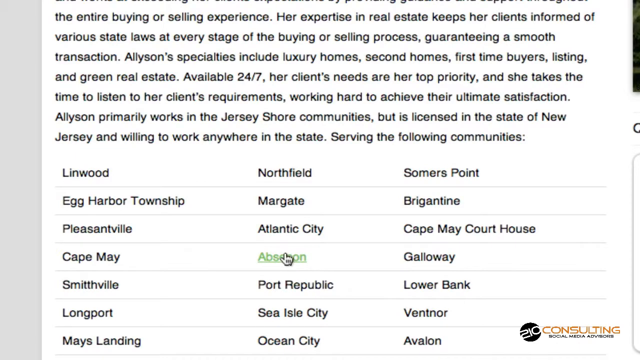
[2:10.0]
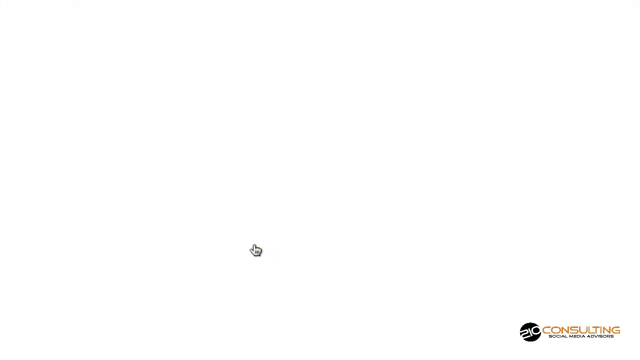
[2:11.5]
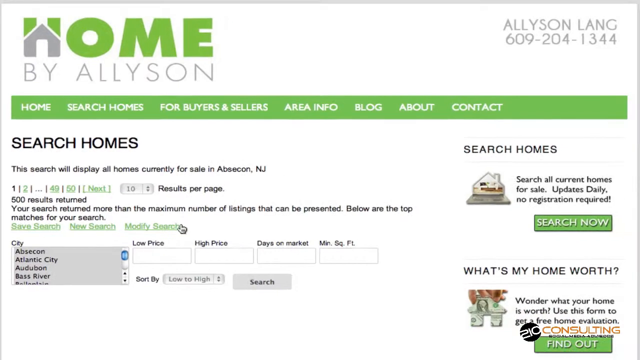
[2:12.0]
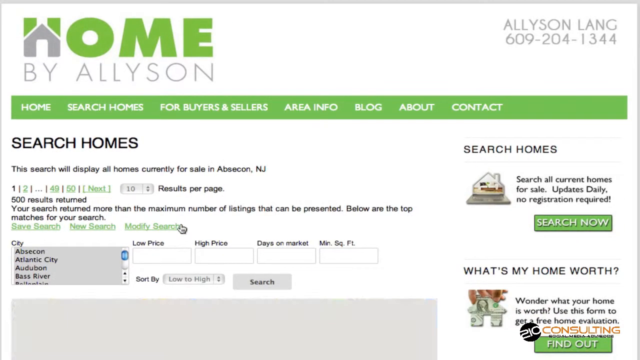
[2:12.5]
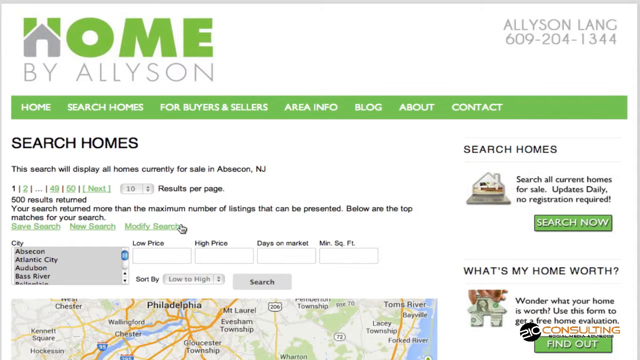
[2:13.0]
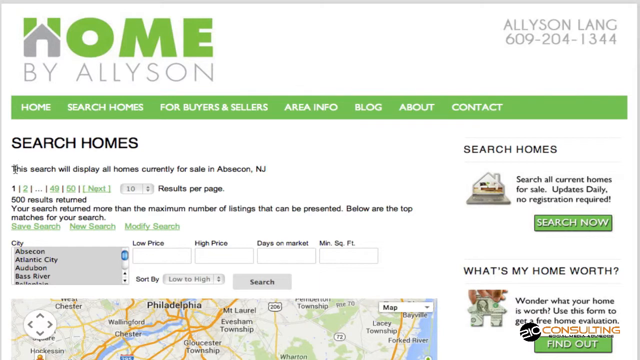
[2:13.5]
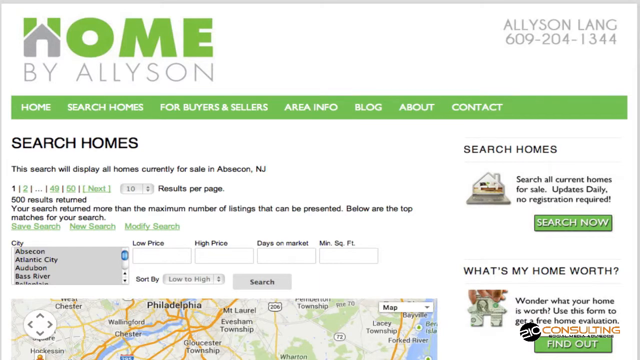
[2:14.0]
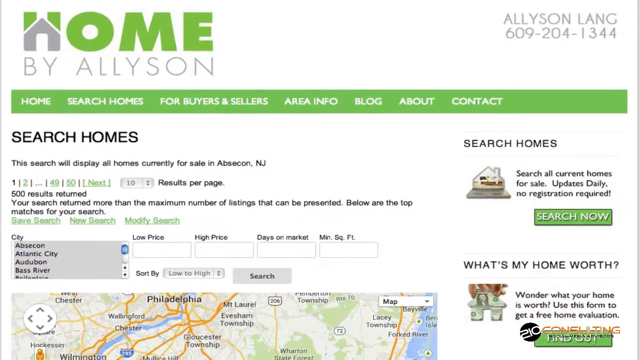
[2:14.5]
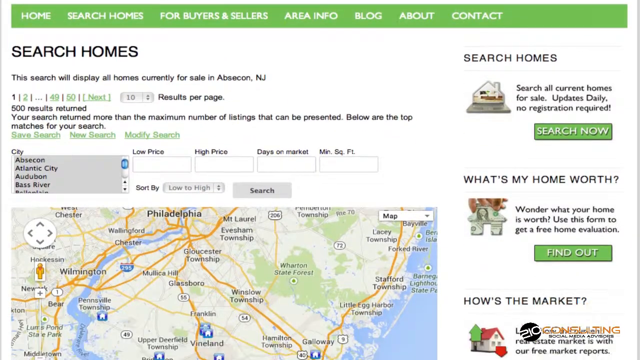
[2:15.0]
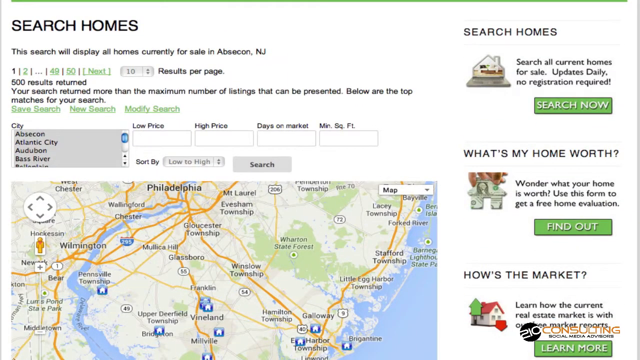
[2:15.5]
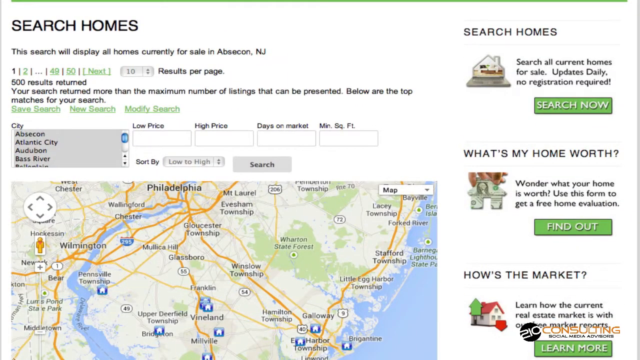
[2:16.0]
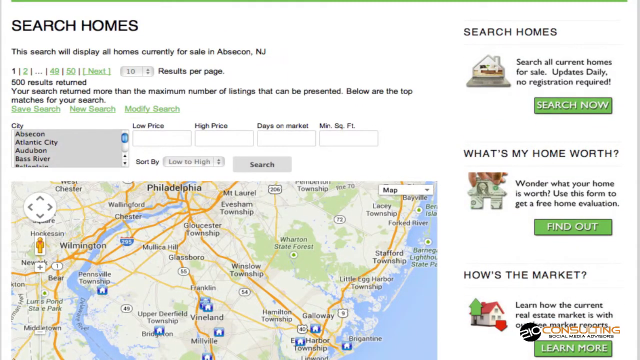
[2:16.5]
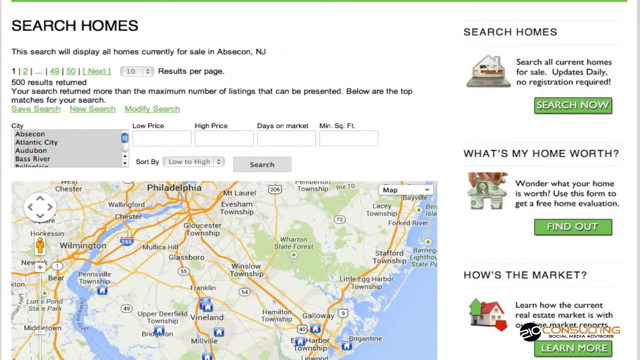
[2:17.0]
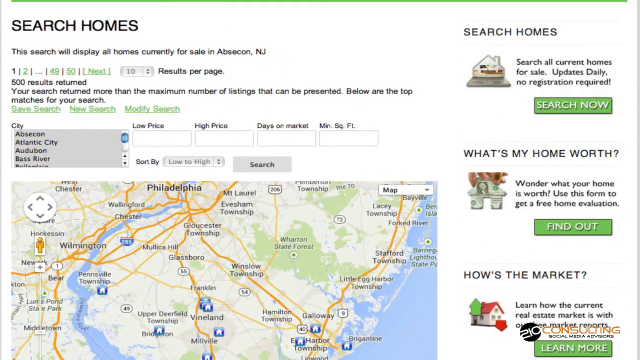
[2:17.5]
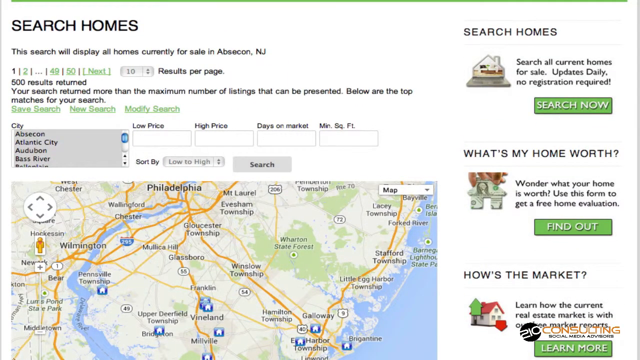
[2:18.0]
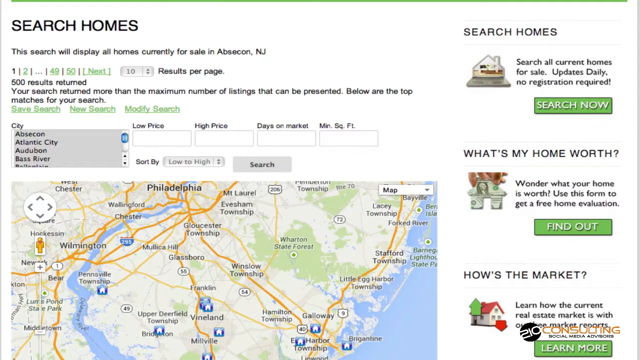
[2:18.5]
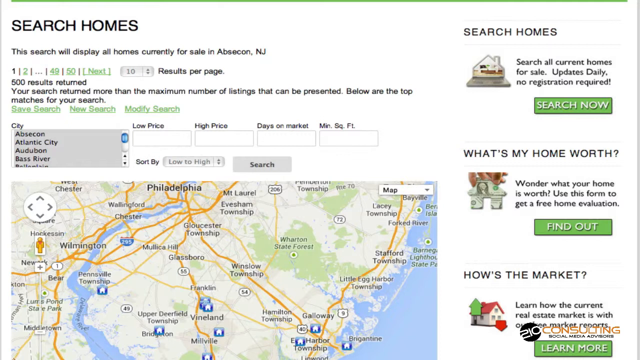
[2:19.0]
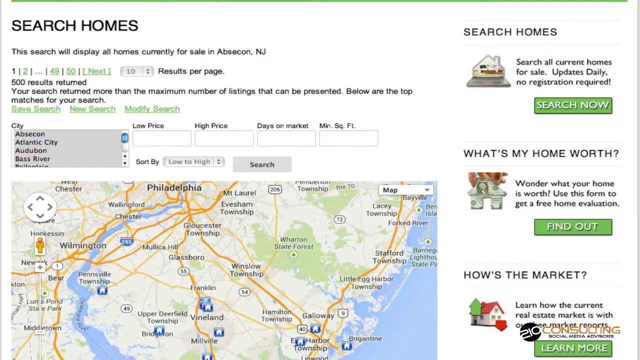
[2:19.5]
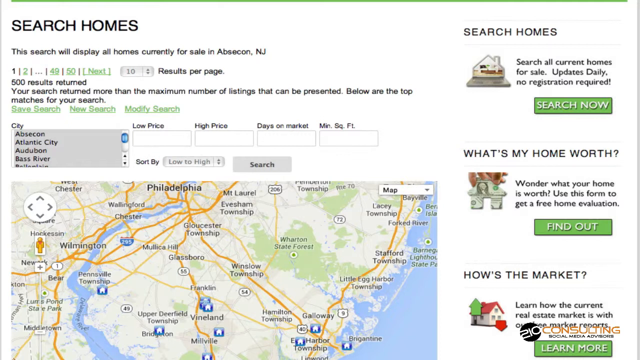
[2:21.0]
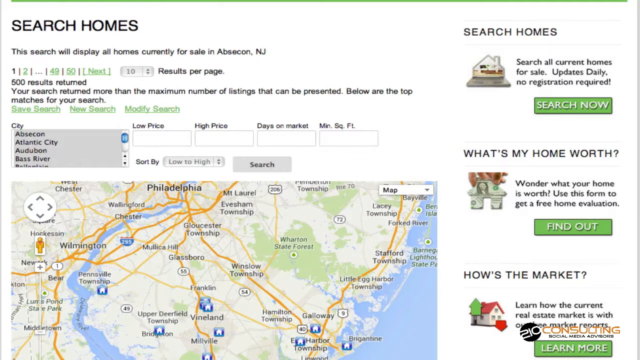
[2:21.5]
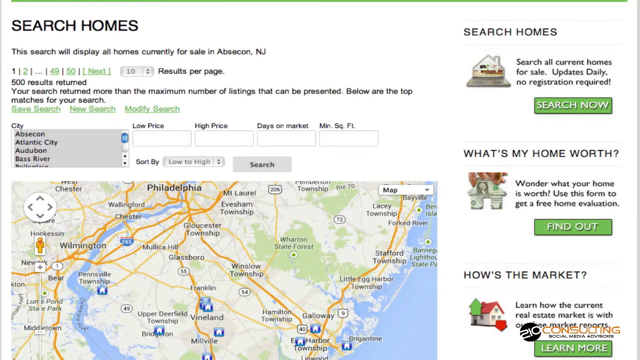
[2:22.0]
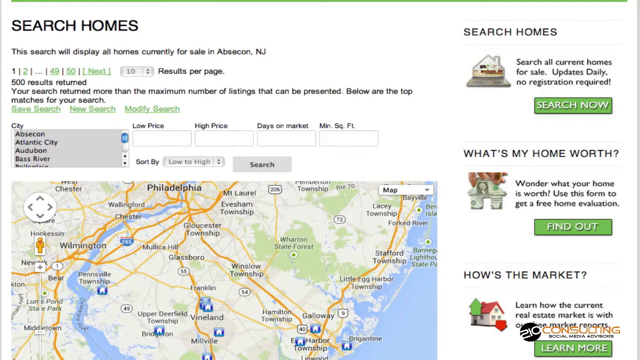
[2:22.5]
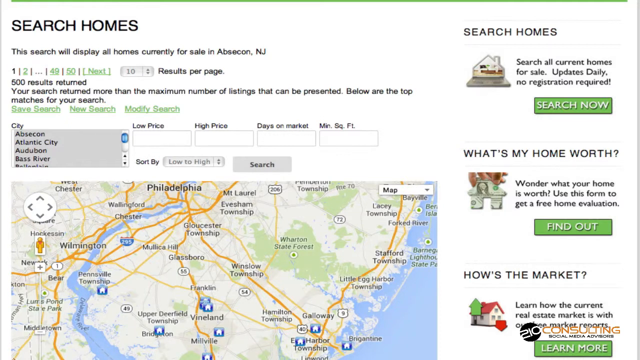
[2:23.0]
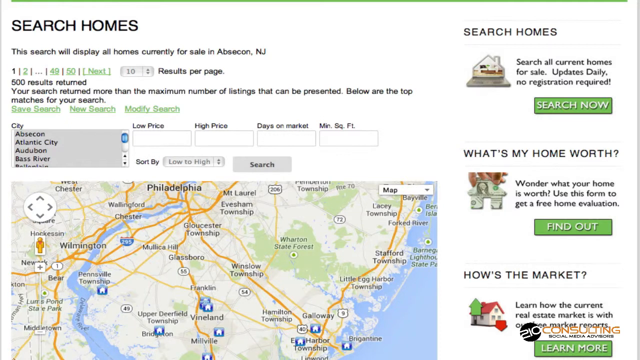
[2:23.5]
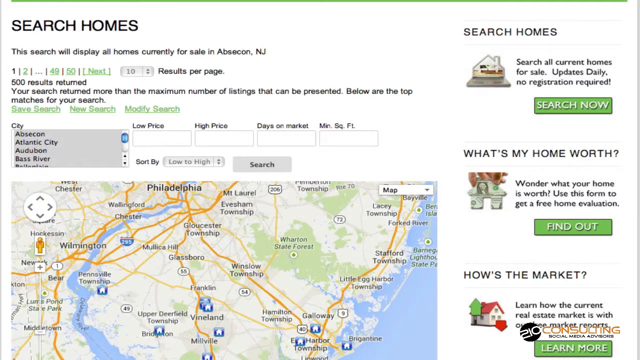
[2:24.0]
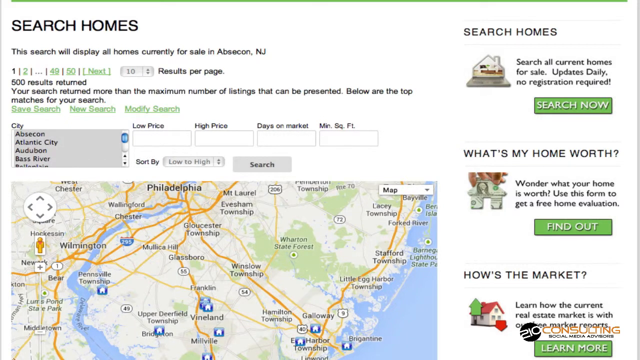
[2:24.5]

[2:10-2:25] The white hand cursor hovers over the community Absecon, causing it to turn green. The user clicks the Absecon hyperlink, which leads to a new page on the Home By Allyson site. Allyson's name and phone number are in the upper right of the screen. A green banner reads "home search homes for buyers and sellers area info blog about and contact". Beneath this banner, in black, is "search homes", followed by "the search will display all homes currently for sale in Absecon, New Jersey". There is a number of pages that looks like at least 50. Underneath some black text are green hyperlinks that read "save search", "new search" and "modify search". As the page scrolls down further, a map of the area appears on the right side of the screen, along with additional options such as "search homes", "what's my home worth" and "how's the market", each header with green clickable buttons under it.